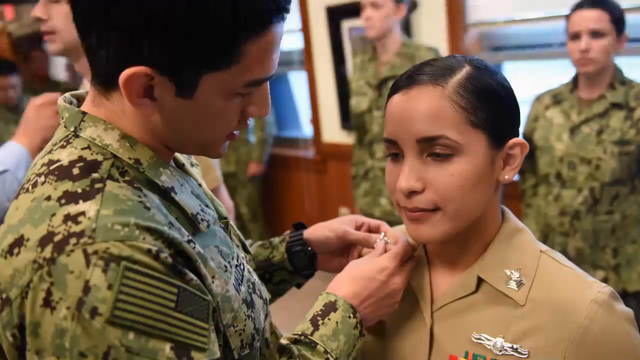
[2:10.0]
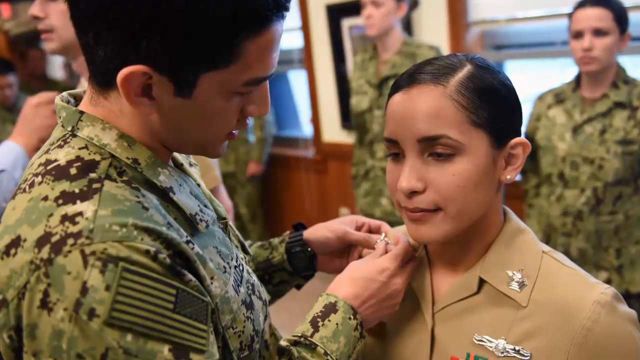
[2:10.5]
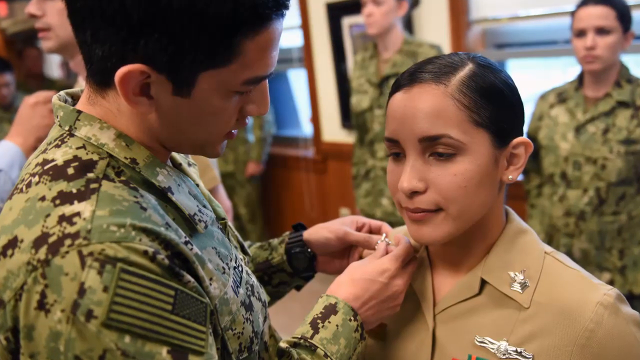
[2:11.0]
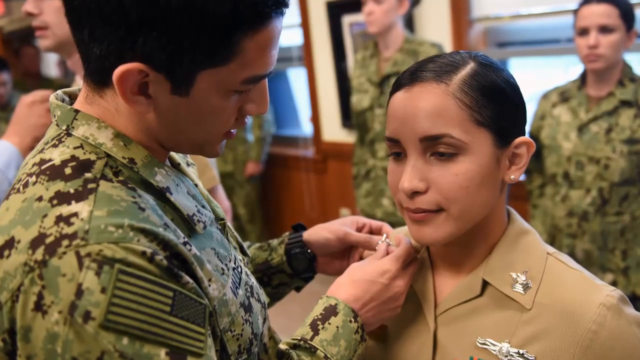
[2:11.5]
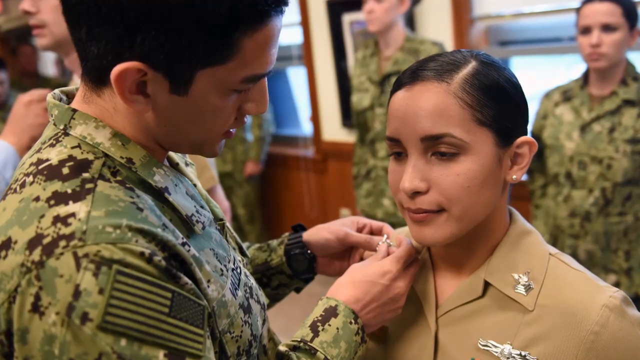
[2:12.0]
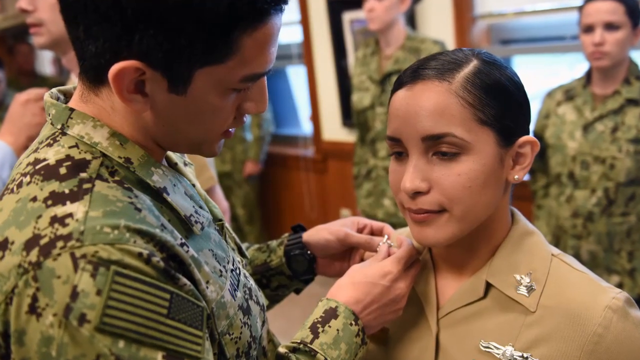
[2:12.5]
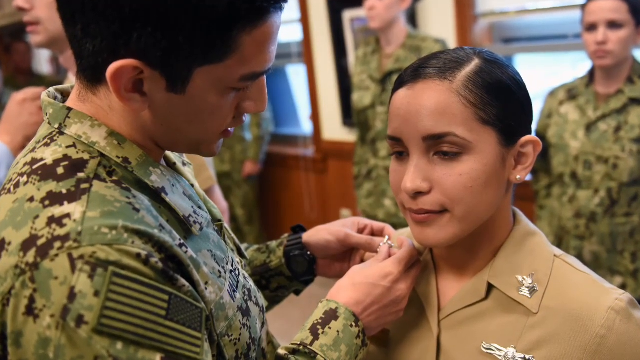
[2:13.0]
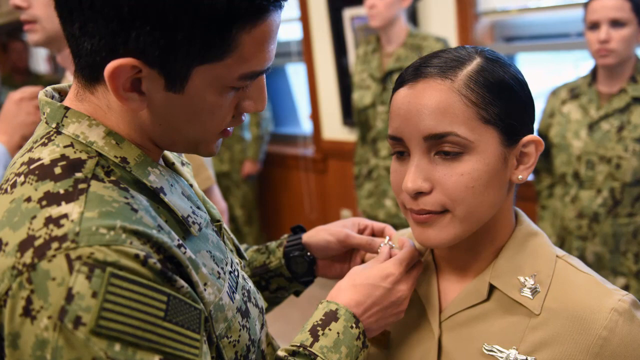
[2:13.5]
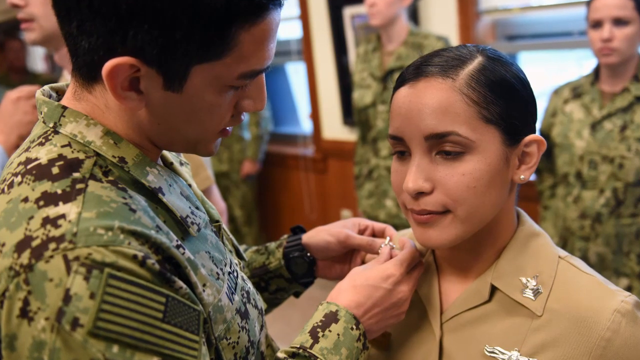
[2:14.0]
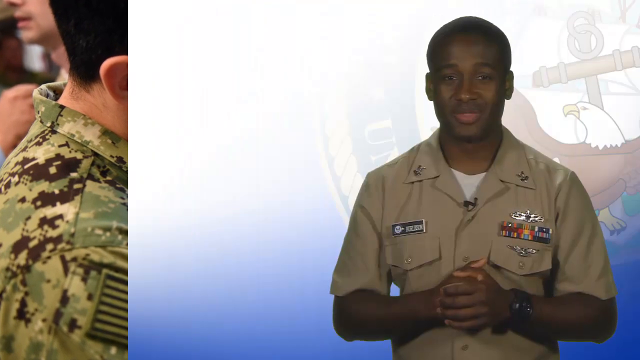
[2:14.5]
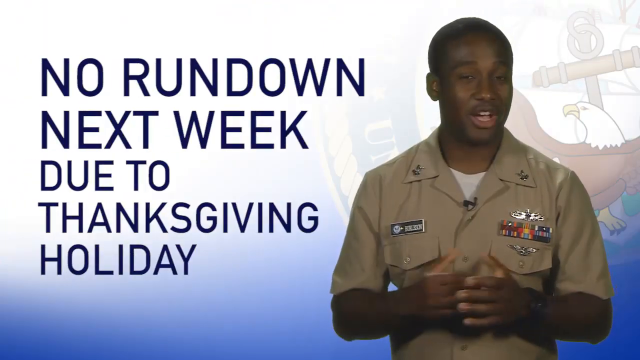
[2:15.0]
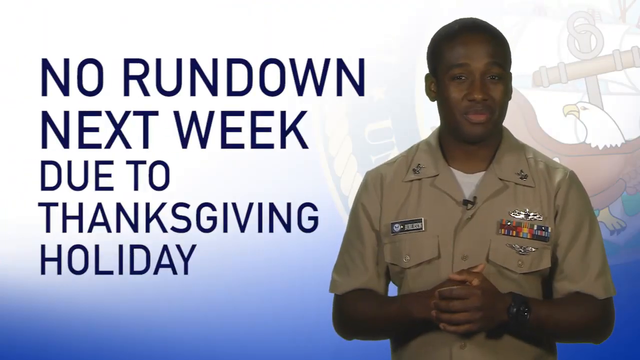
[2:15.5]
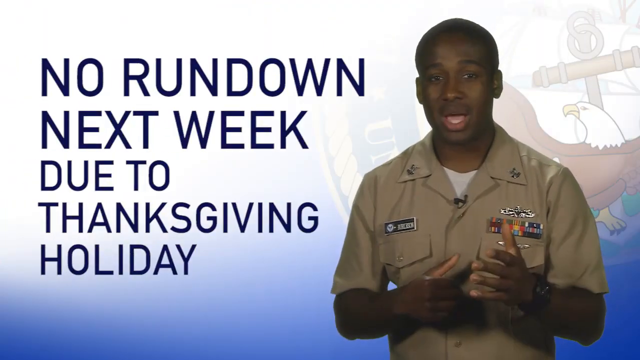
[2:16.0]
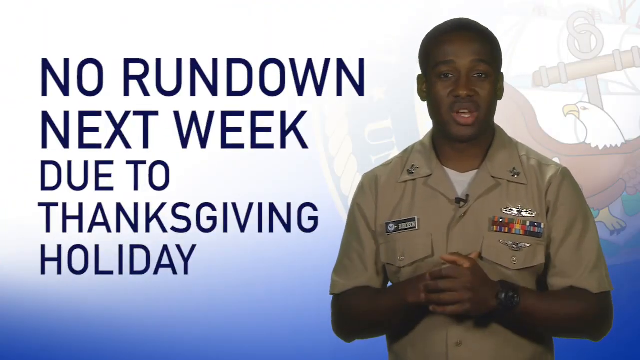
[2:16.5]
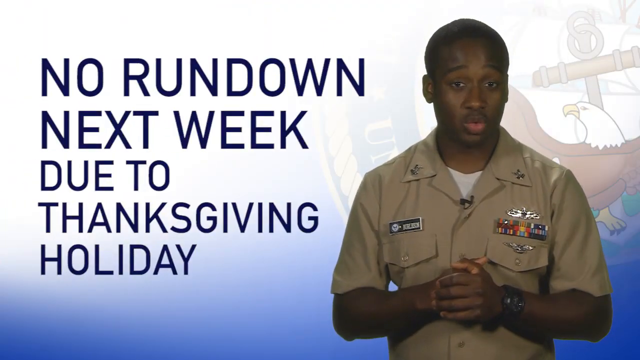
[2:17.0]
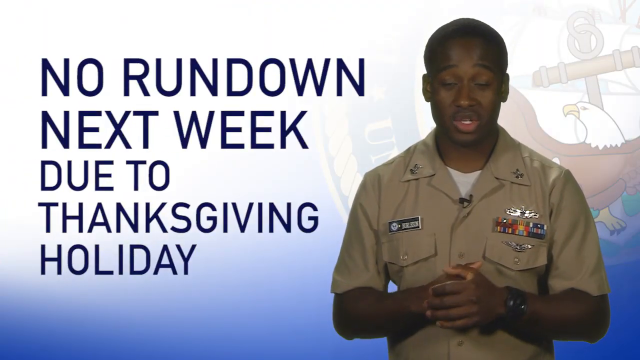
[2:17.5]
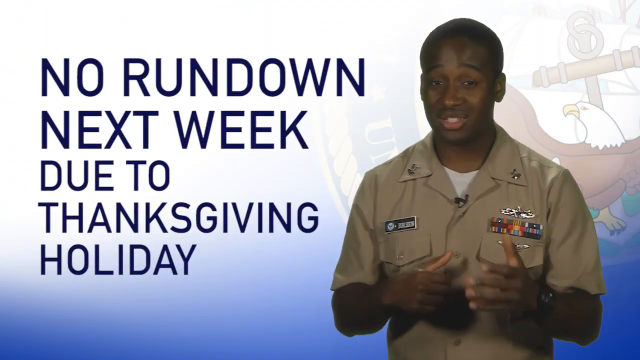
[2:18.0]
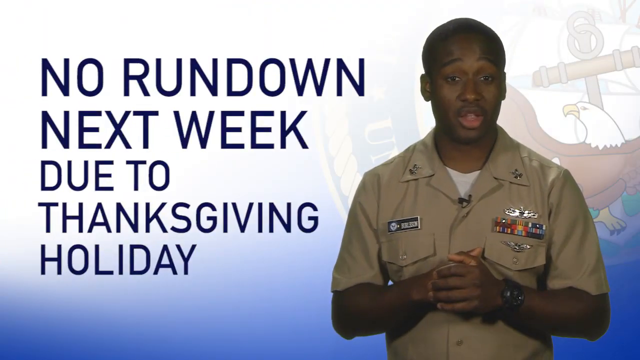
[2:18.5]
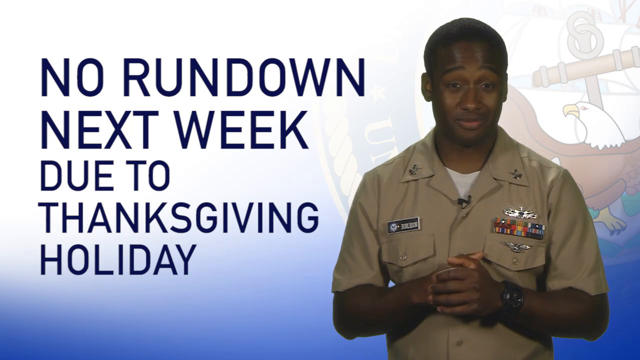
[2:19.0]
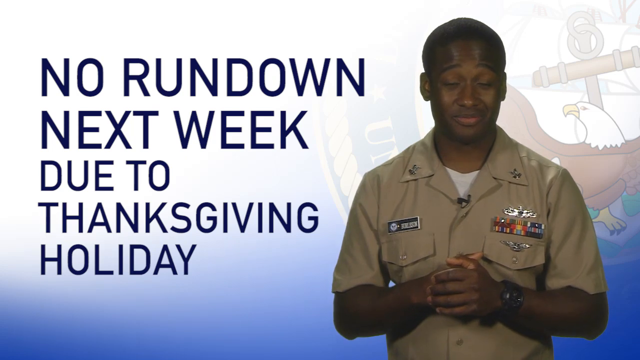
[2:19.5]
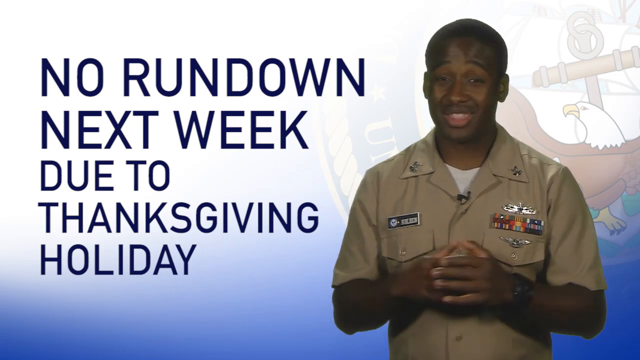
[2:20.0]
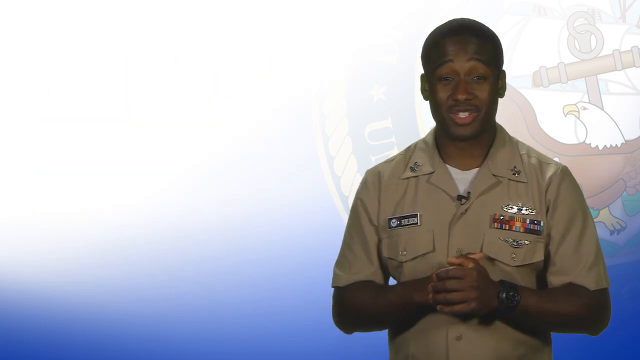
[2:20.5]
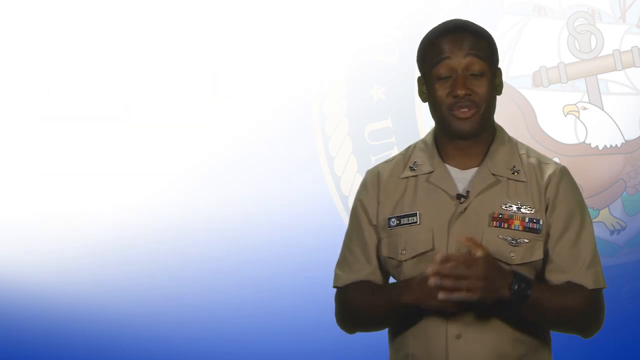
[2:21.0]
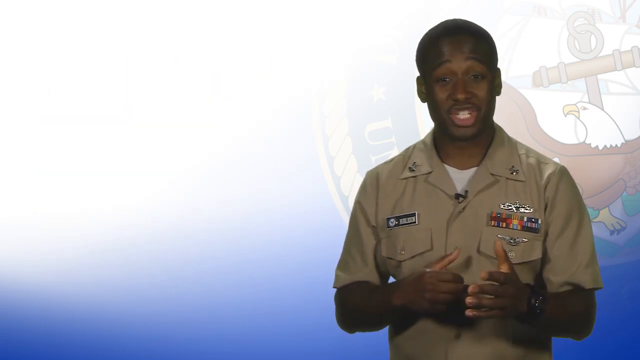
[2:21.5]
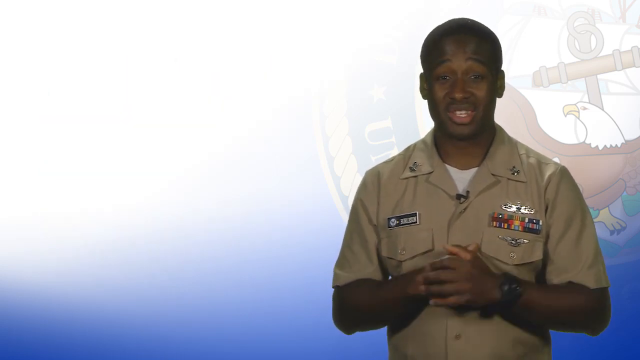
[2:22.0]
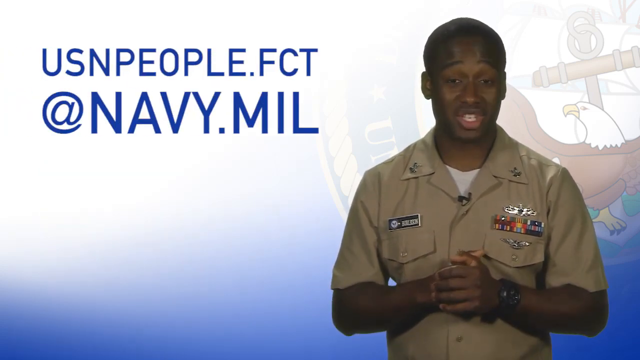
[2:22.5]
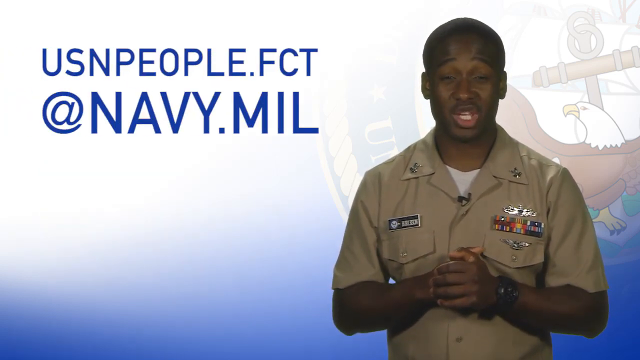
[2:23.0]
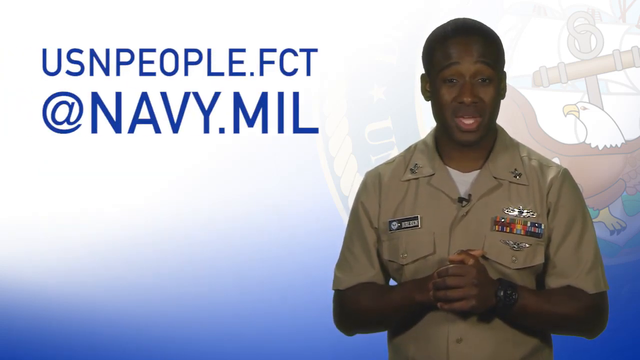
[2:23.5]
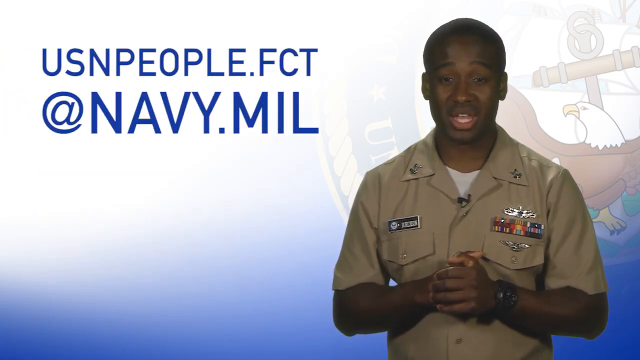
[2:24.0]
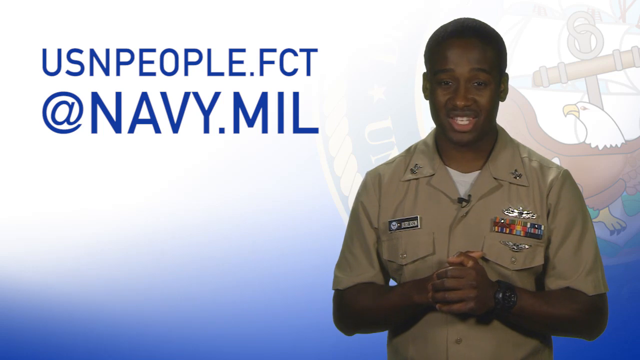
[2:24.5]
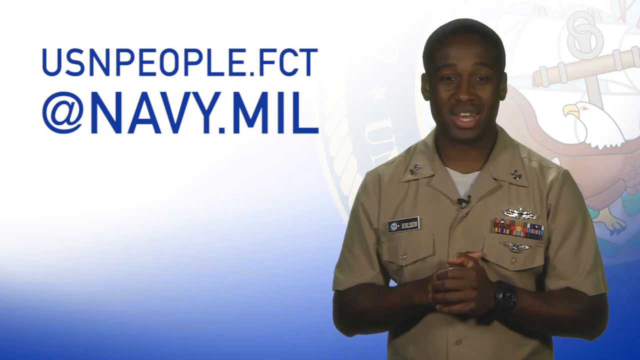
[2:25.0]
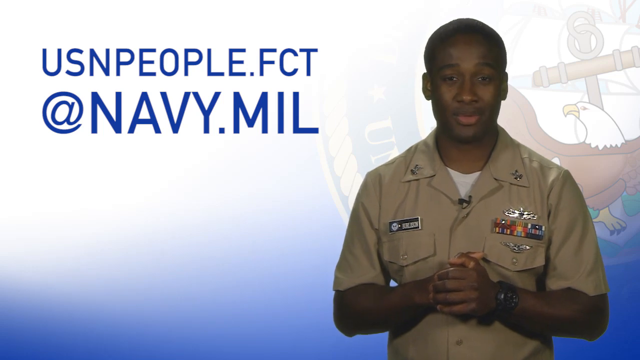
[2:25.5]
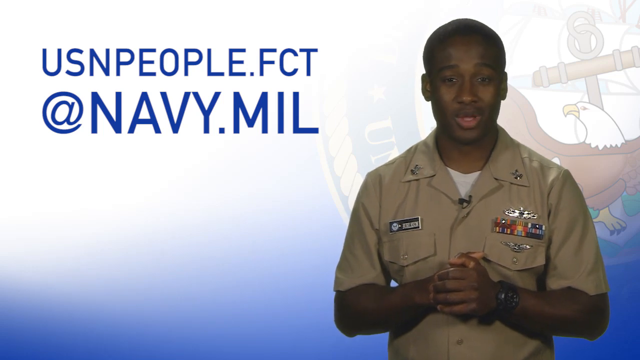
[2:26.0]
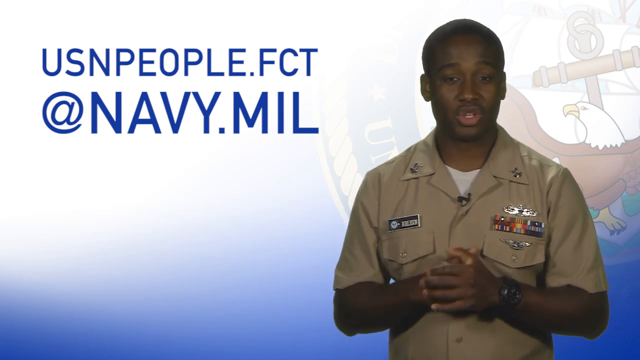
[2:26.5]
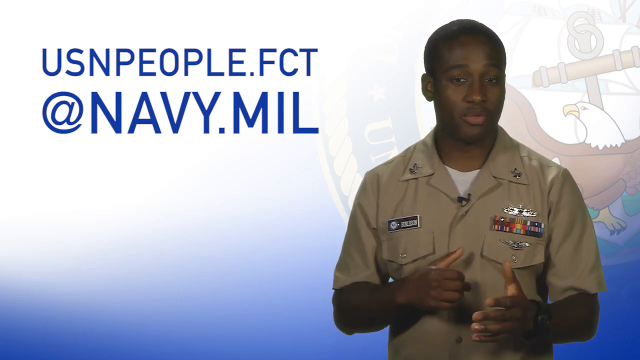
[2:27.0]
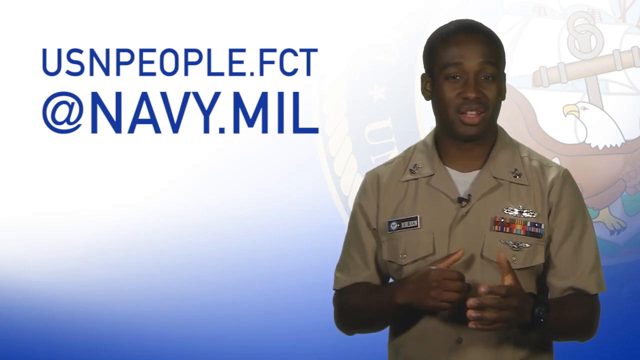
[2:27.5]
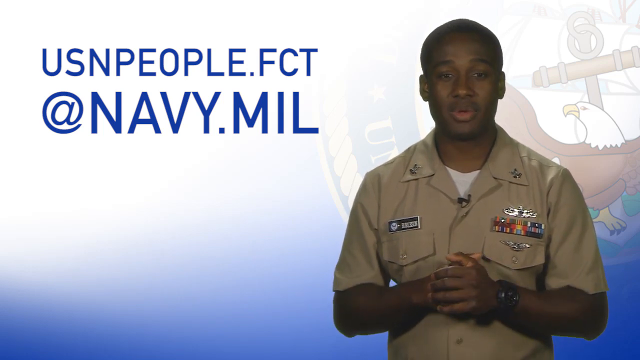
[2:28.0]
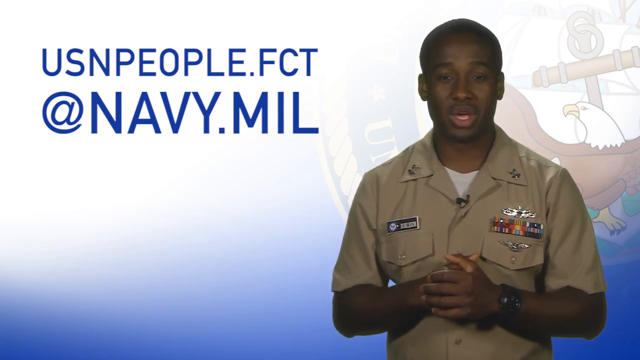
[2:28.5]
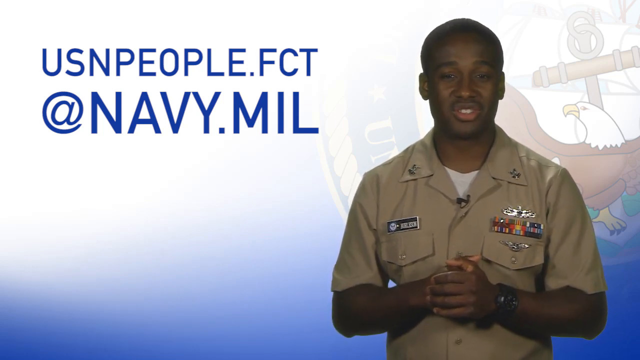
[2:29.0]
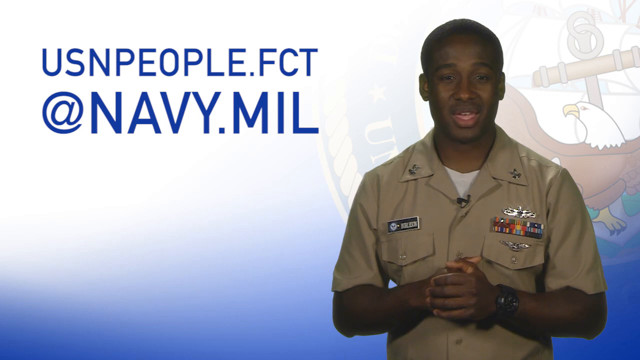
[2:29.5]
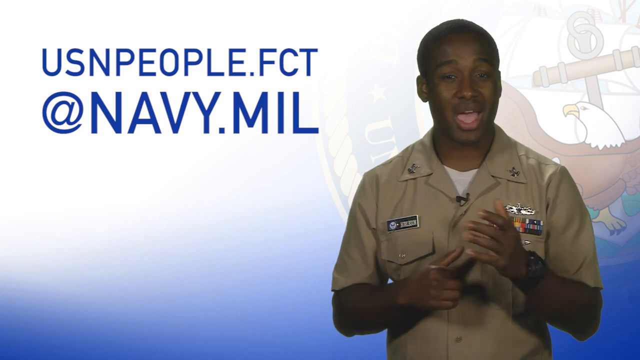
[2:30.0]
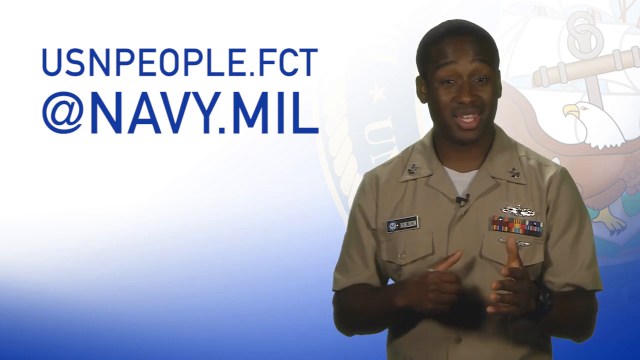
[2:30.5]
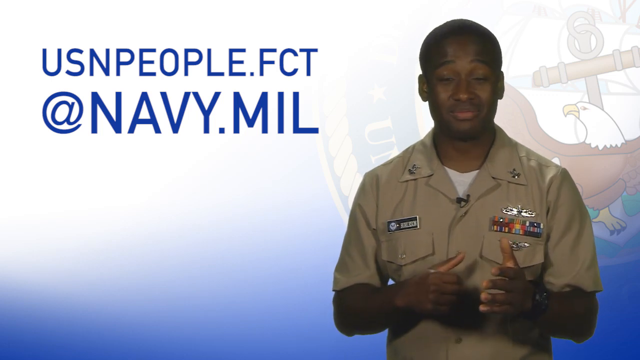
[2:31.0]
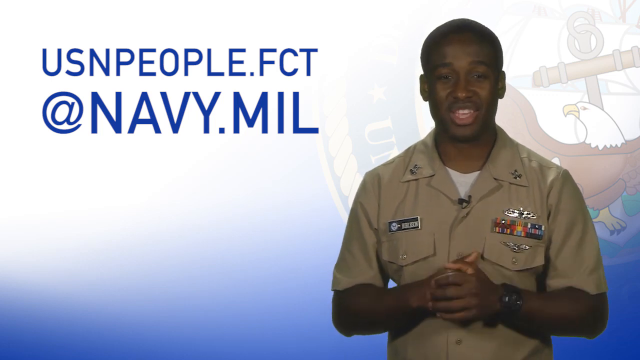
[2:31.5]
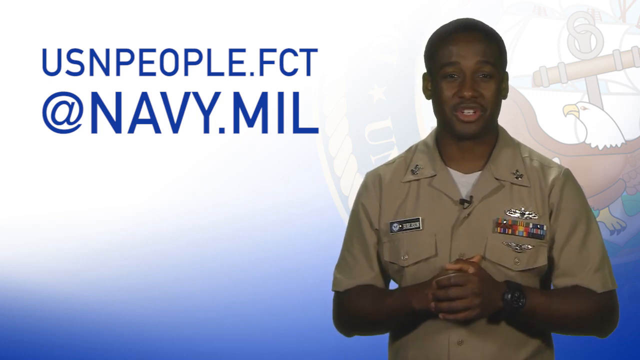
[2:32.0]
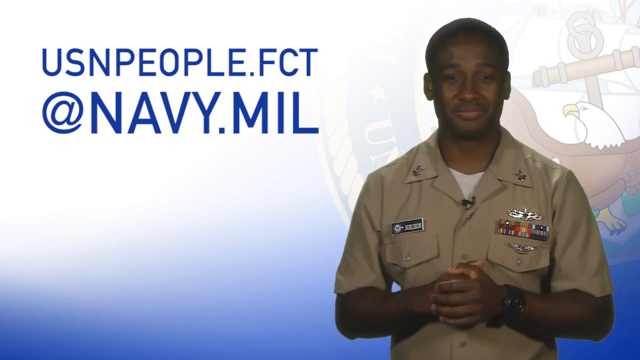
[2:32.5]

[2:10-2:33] An army soldier pins a medal on the collar of a younger female recruit, with other soldiers in the background. He wears green camouflage with an American flag on his arm, and she wears a brown shirt. Everybody is standing at attention. The next shot shows a young Black soldier with a buzz cut wearing a brown shirt with medals on his chest and his name on the other side. Text on the screen reads "No rundown next week due to Thanksgiving holiday" in blue on a white background, and the background also shows the United States government logo with an eagle on the badge. The man gestures with his hands, puts them back in the praying position and opens them up in a welcoming manner. The next text reads "usnpeople.fct@navy.mil." The man keeps gesturing in a happy, welcoming manner and smiles at the end.